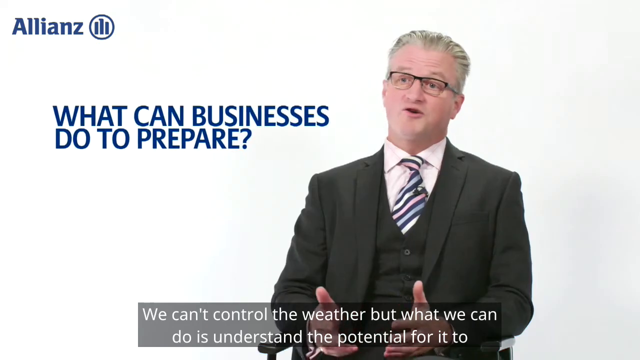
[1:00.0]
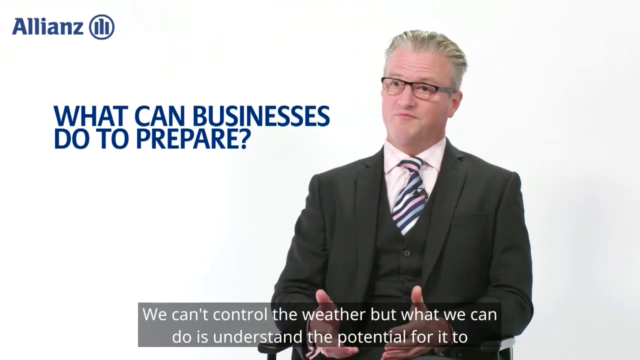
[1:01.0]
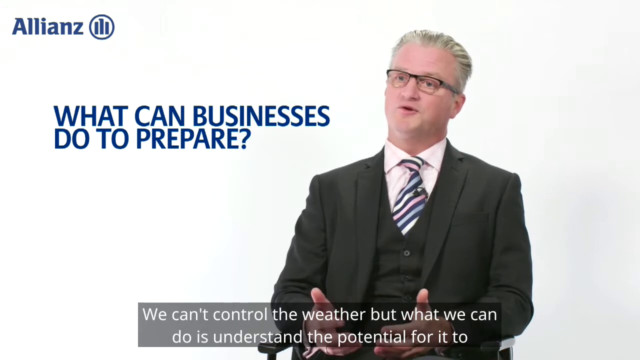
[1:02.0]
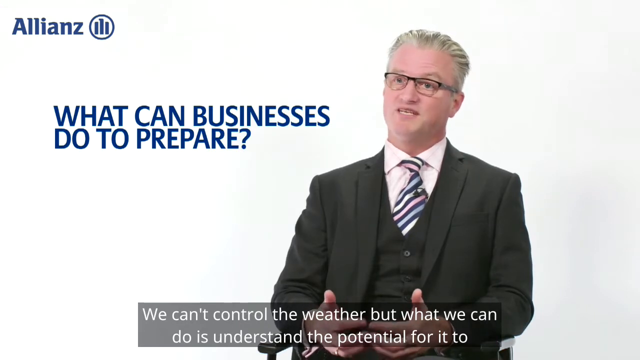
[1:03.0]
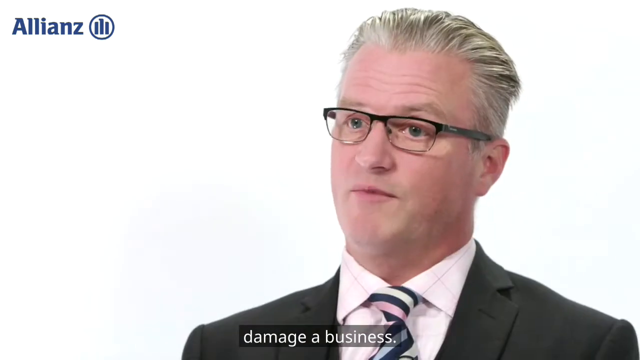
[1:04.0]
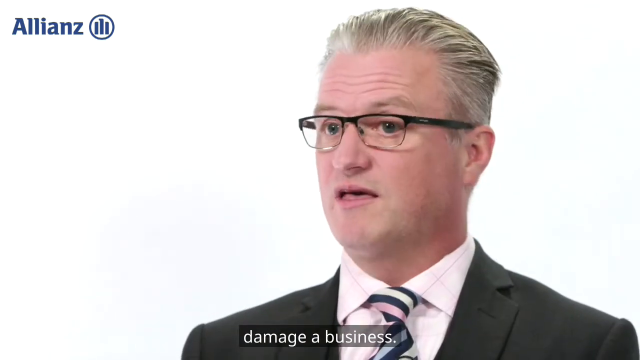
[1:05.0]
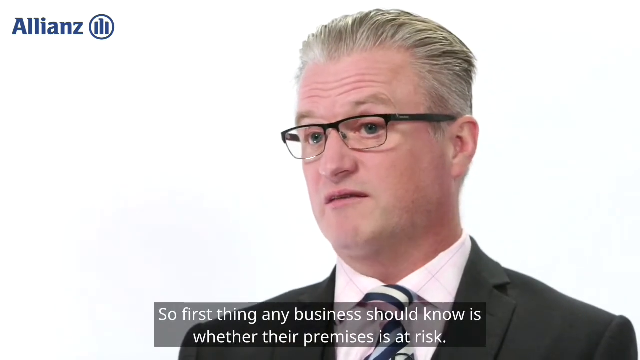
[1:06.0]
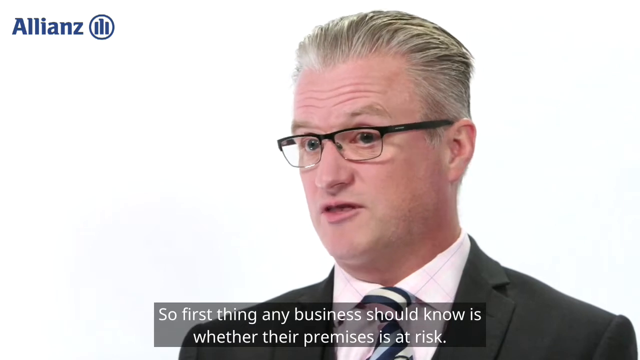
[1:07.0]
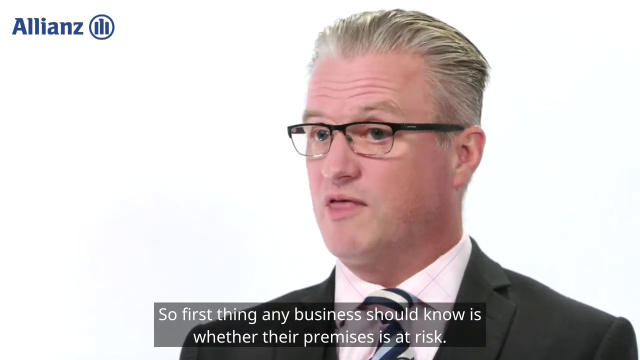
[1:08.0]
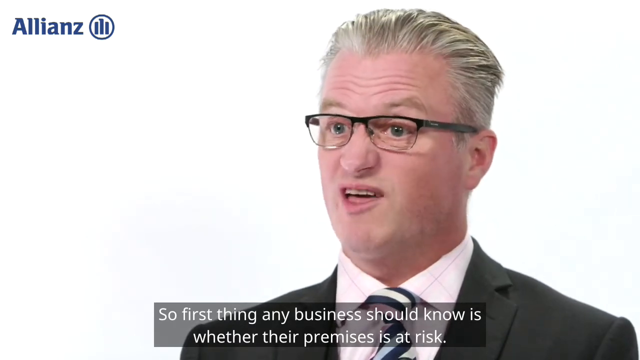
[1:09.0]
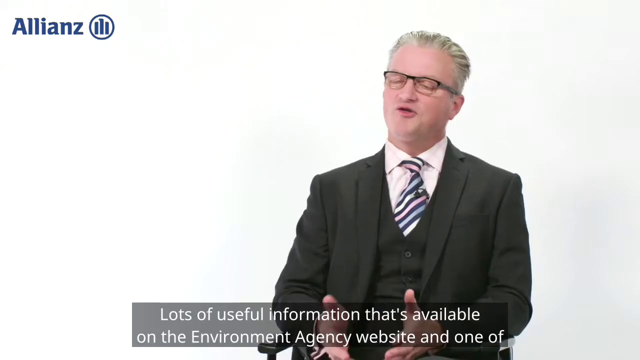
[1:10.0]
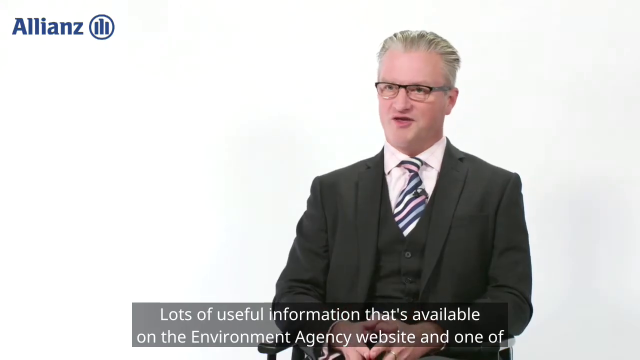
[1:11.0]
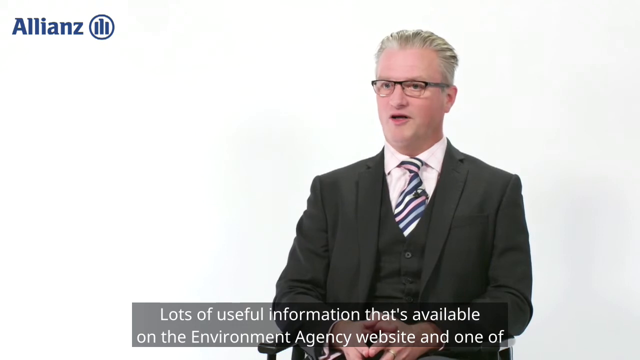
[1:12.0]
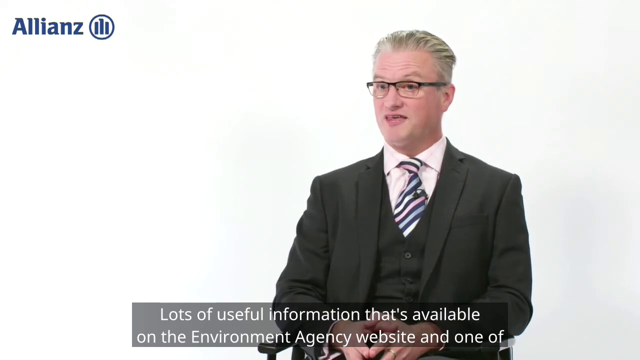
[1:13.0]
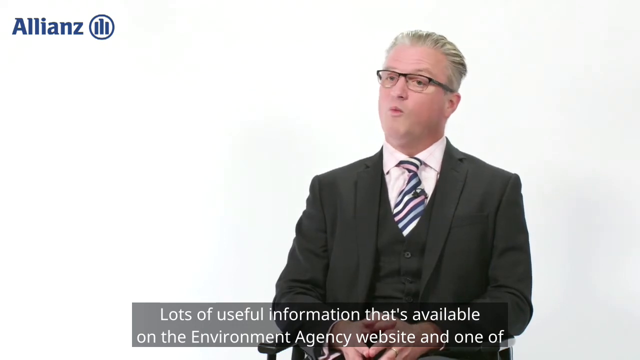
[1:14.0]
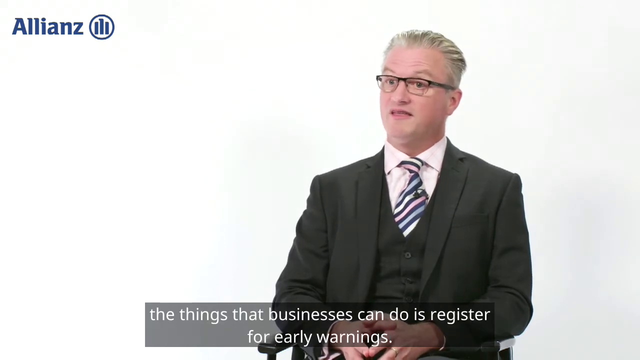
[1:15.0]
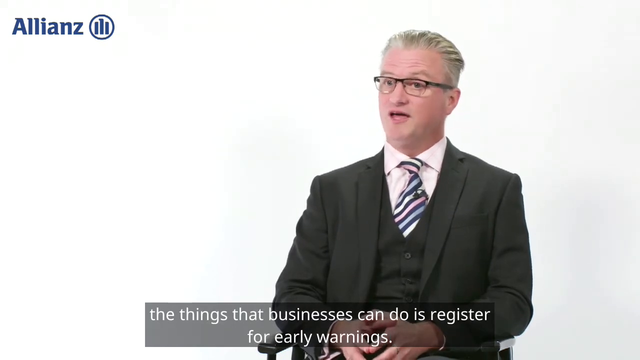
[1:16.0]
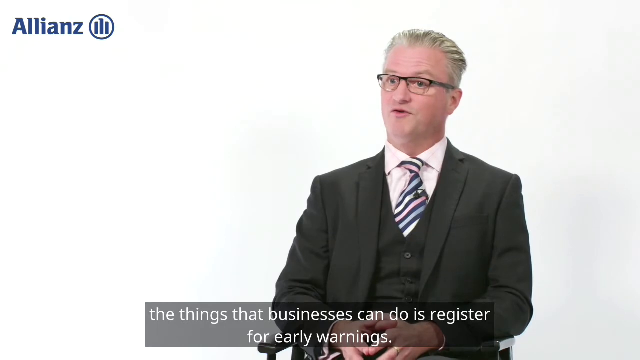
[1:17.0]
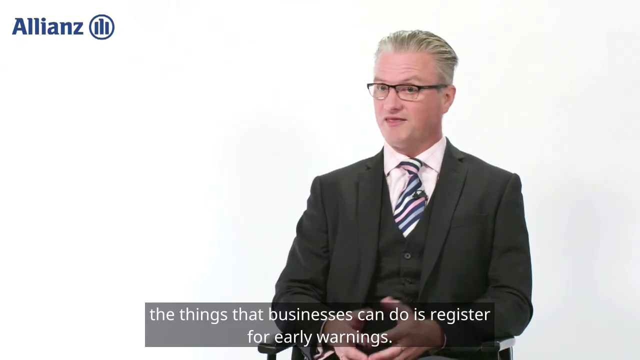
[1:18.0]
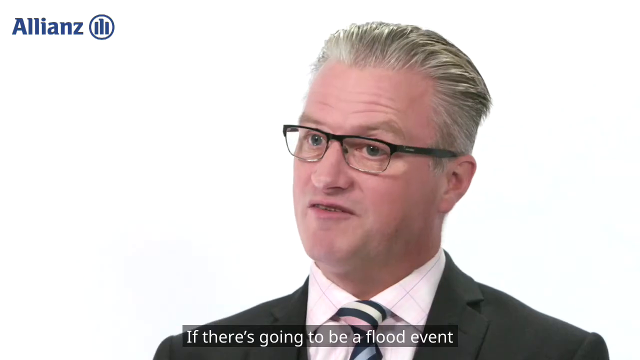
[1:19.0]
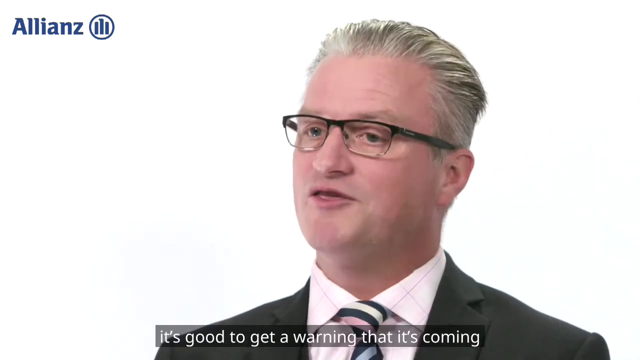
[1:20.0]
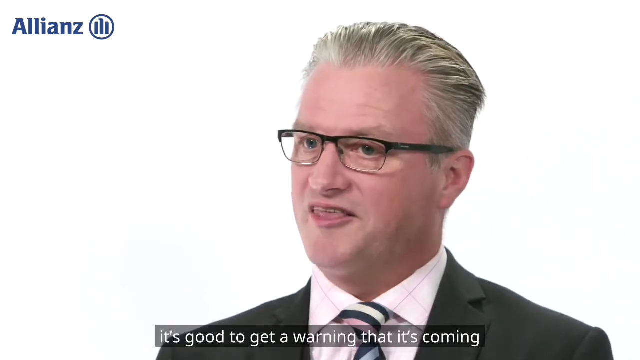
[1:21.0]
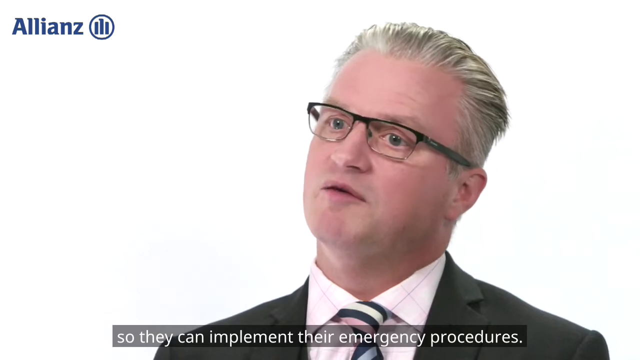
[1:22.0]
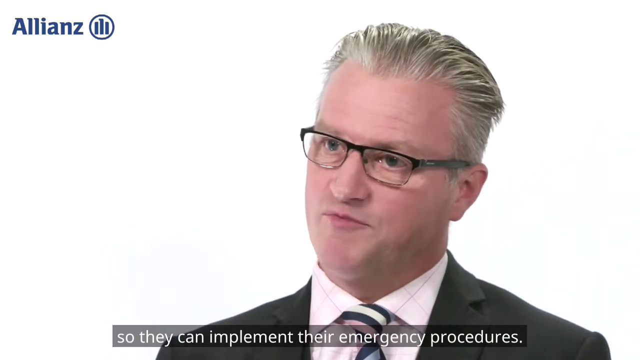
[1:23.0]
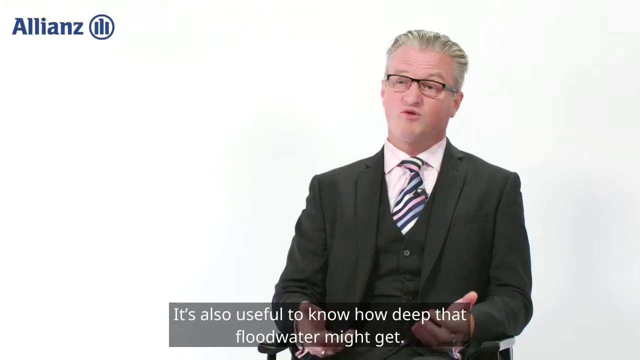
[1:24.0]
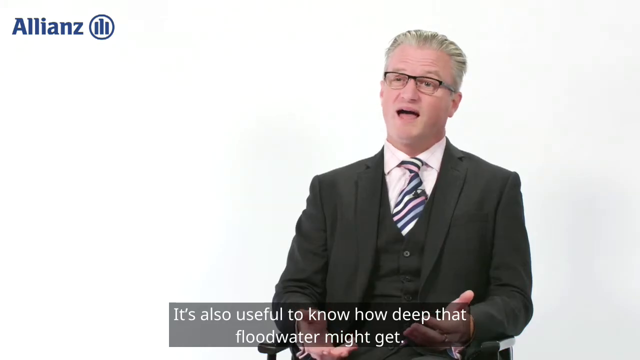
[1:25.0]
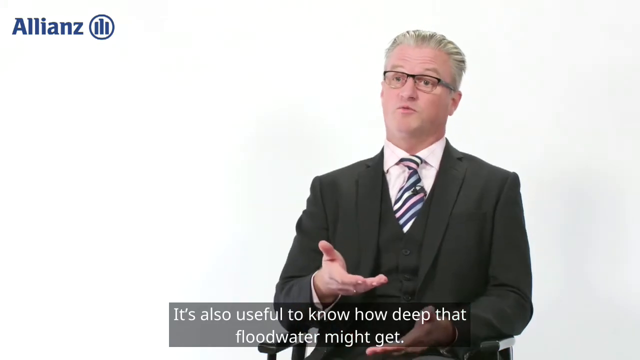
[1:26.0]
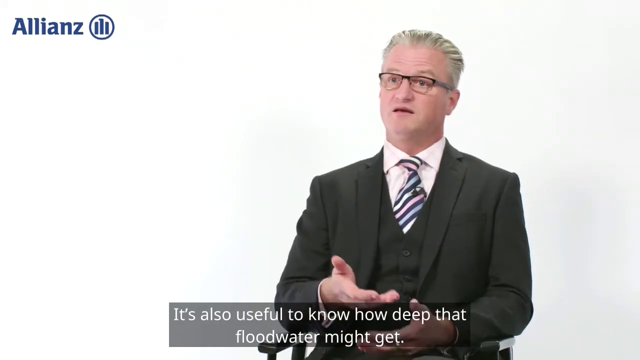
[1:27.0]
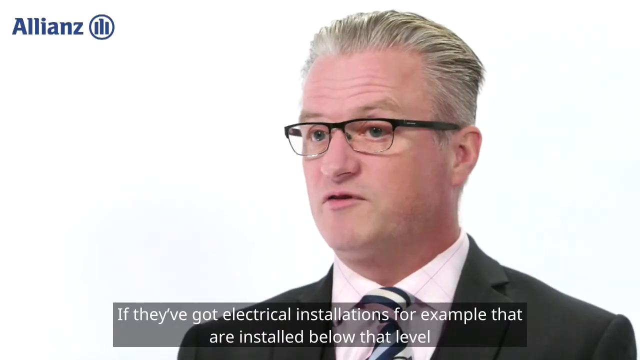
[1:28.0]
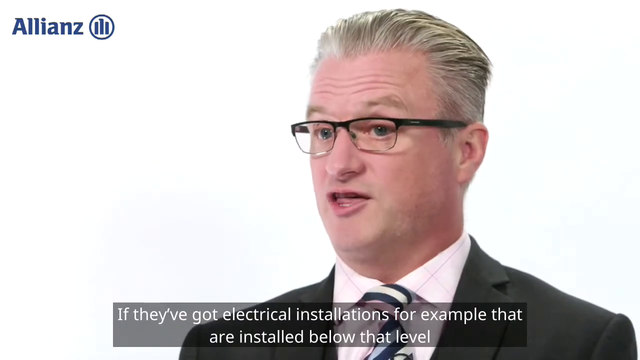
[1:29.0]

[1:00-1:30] A blue question in bold capital letters on the left side of the screen reads "what can businesses do to prepare?" The same man is shown, with white subtitles at the bottom reading "we can't control the weather, but we can," "So the first thing any business should know is whether their premises is at risk," "Lots of useful information that's available on the Environment Agency website," "one of the things that businesses can do is register for early warnings," and "It's also useful to know how deep the flood water might be."